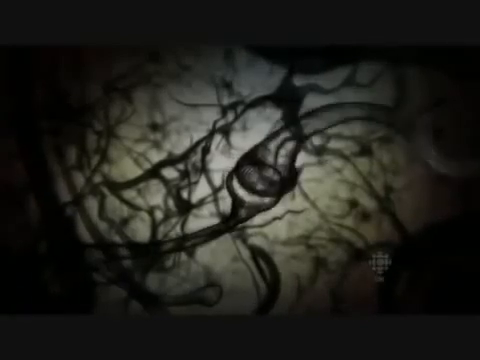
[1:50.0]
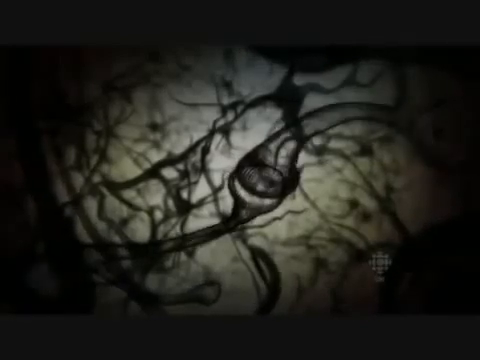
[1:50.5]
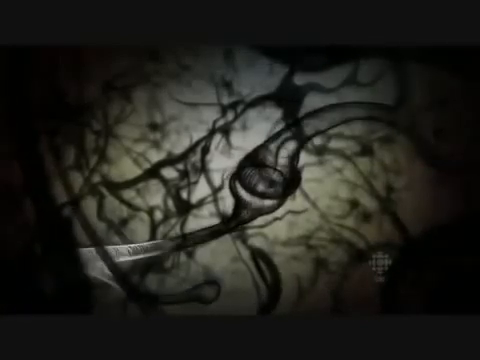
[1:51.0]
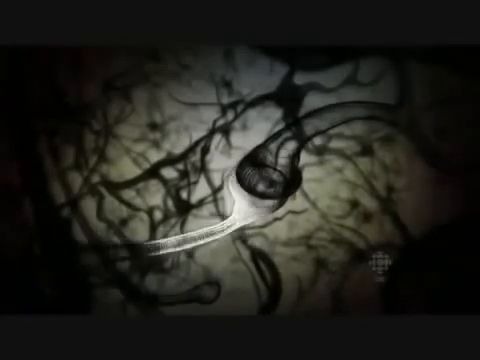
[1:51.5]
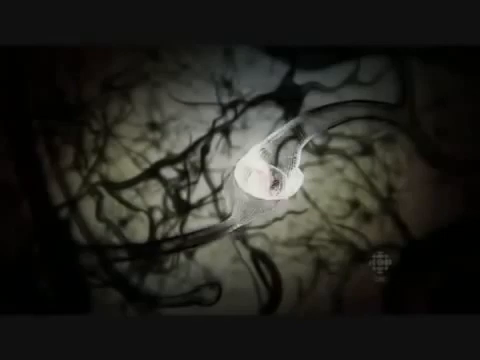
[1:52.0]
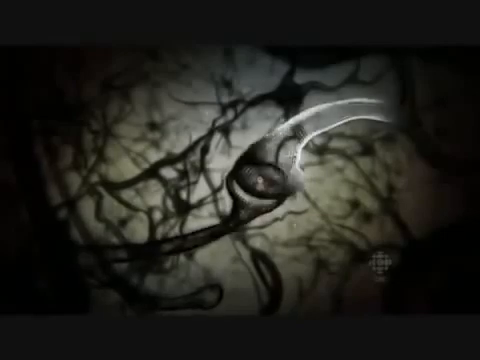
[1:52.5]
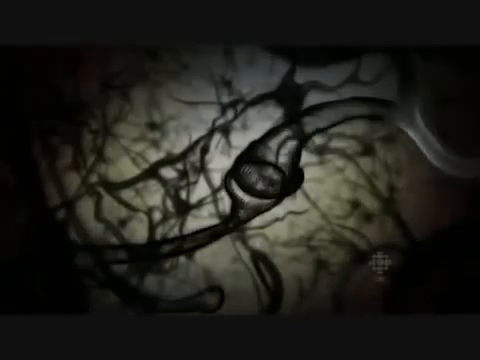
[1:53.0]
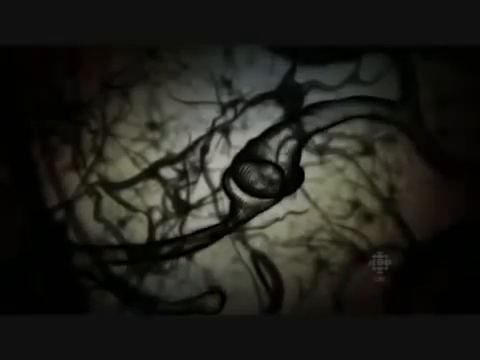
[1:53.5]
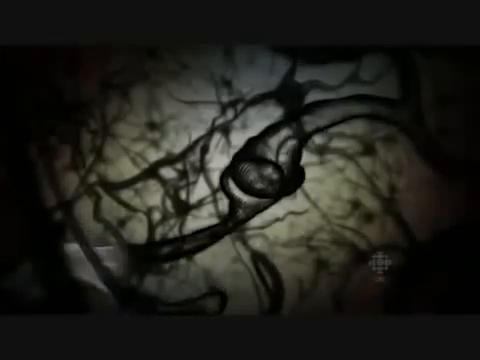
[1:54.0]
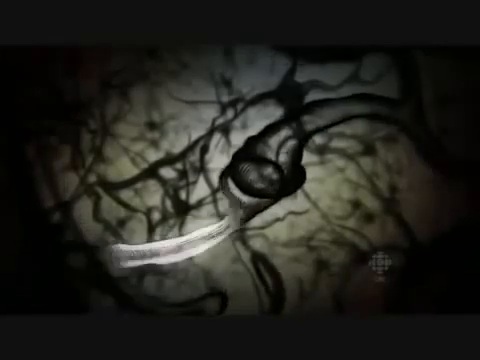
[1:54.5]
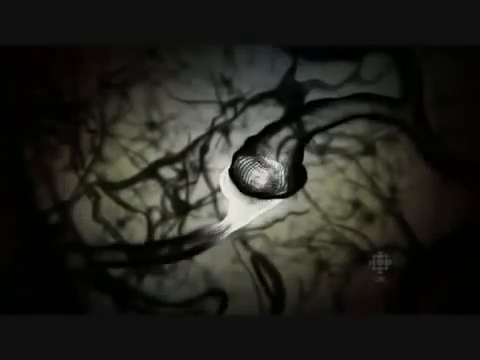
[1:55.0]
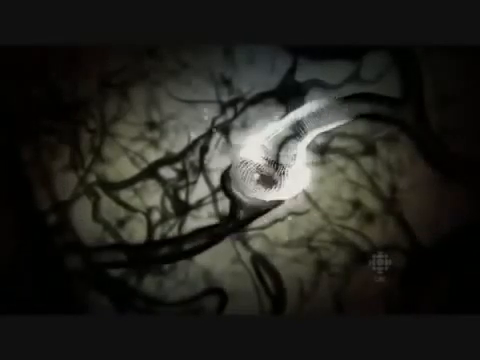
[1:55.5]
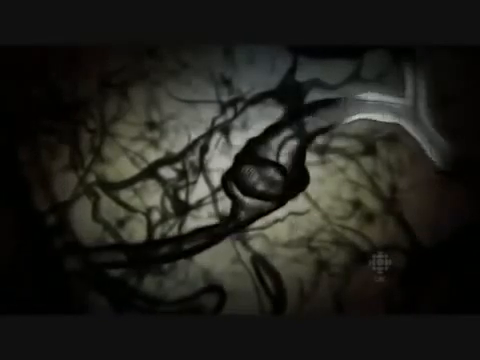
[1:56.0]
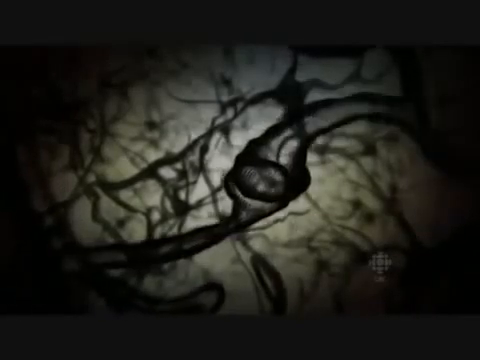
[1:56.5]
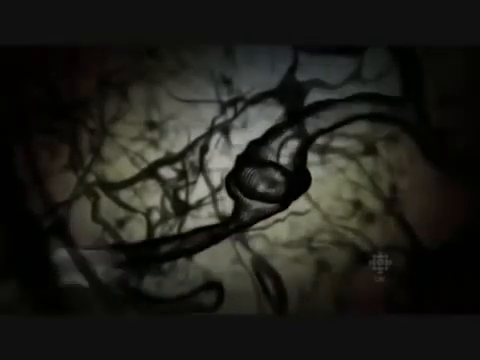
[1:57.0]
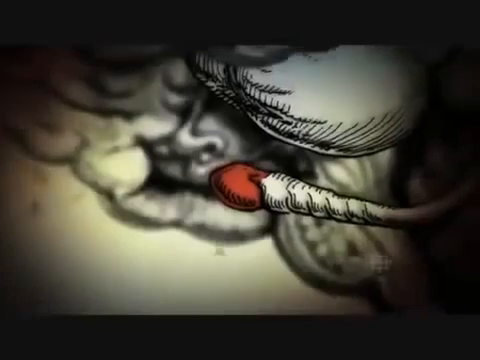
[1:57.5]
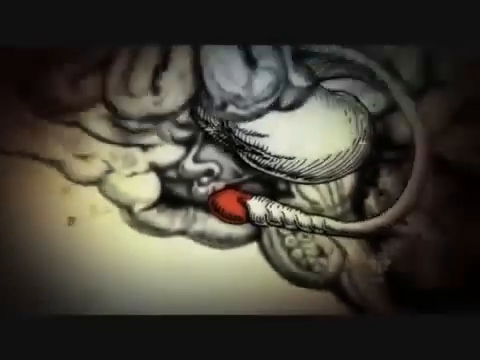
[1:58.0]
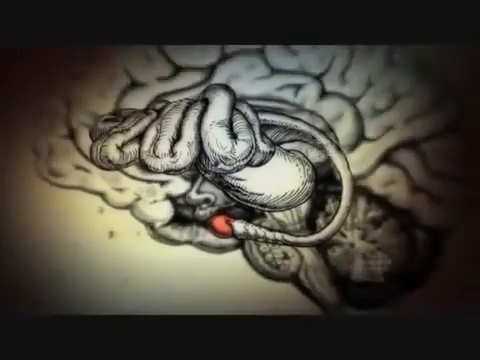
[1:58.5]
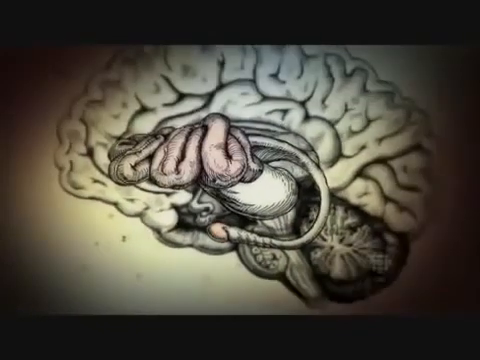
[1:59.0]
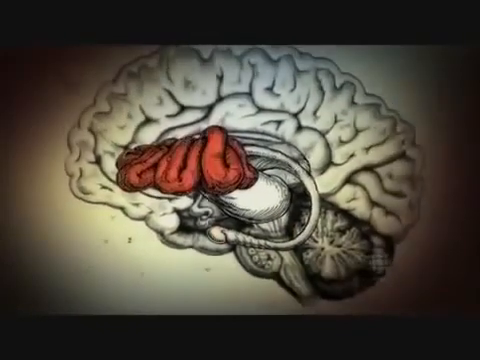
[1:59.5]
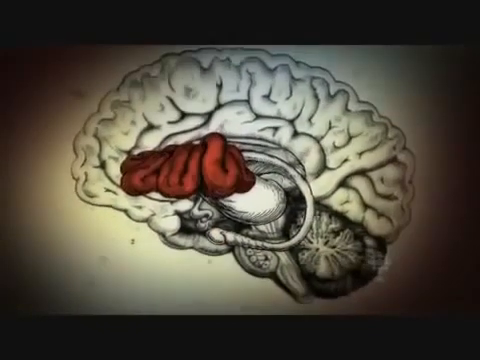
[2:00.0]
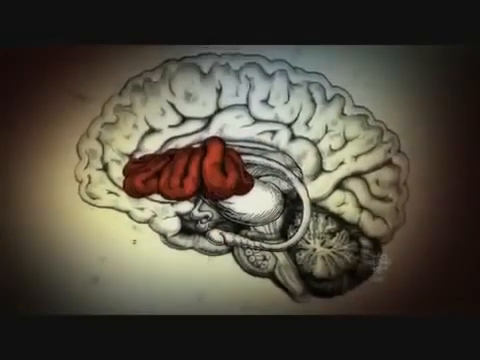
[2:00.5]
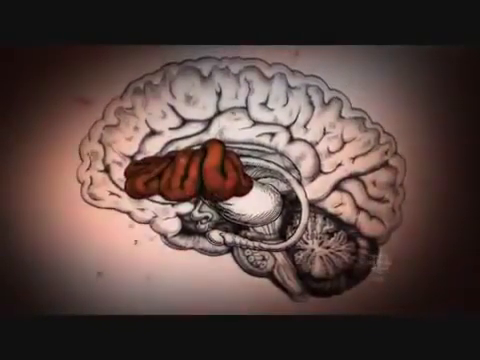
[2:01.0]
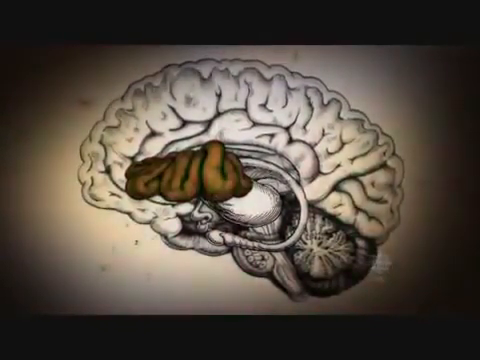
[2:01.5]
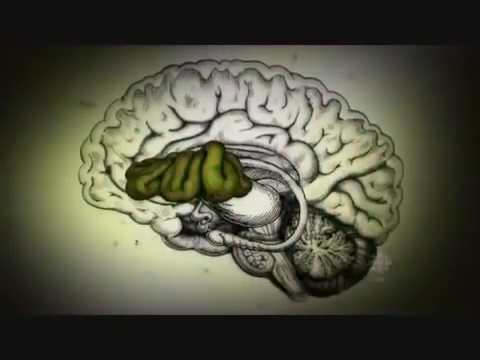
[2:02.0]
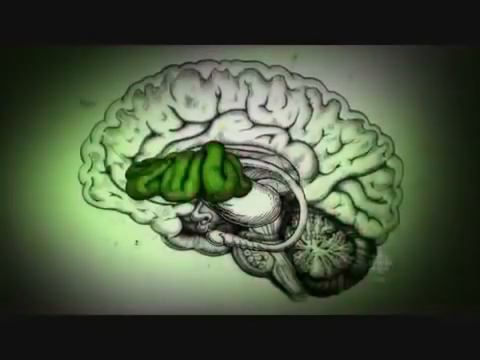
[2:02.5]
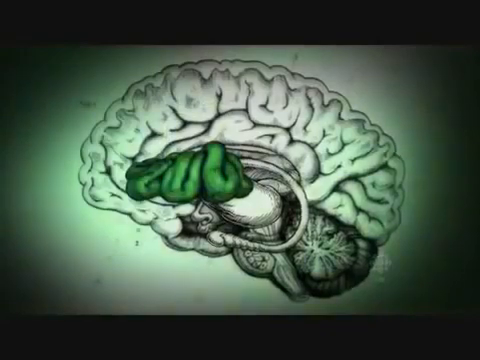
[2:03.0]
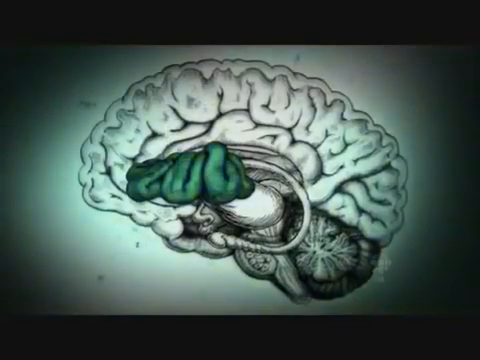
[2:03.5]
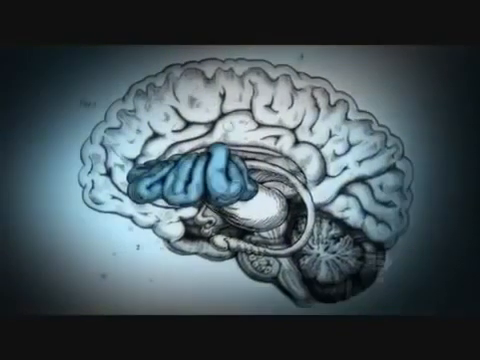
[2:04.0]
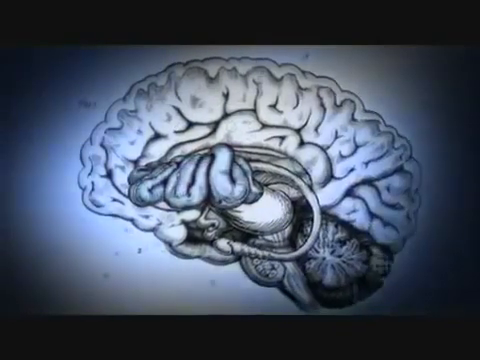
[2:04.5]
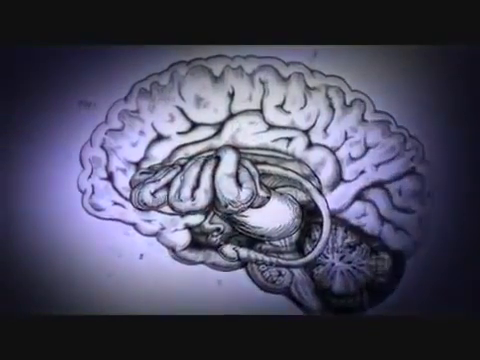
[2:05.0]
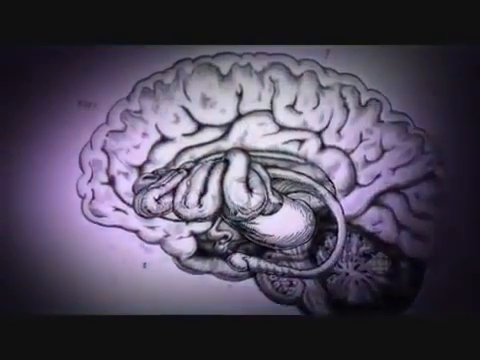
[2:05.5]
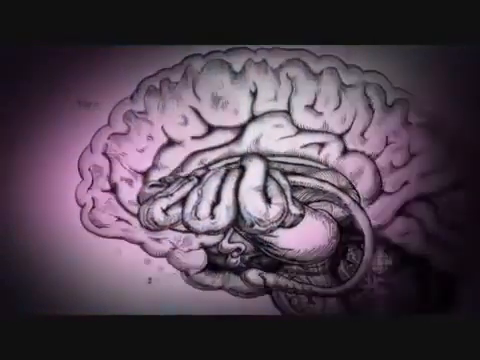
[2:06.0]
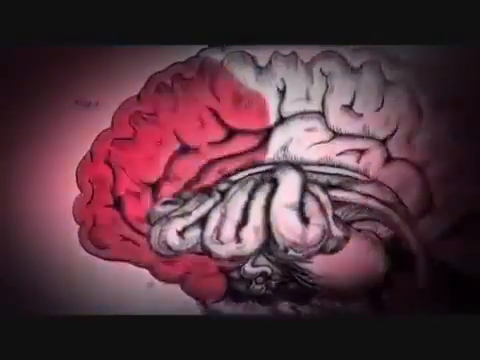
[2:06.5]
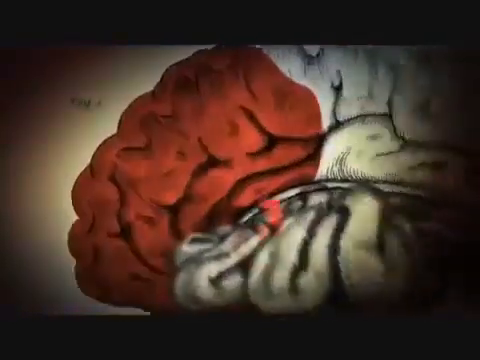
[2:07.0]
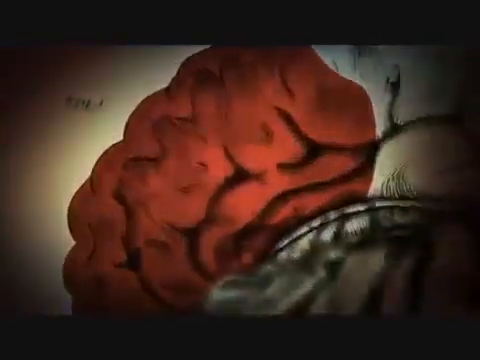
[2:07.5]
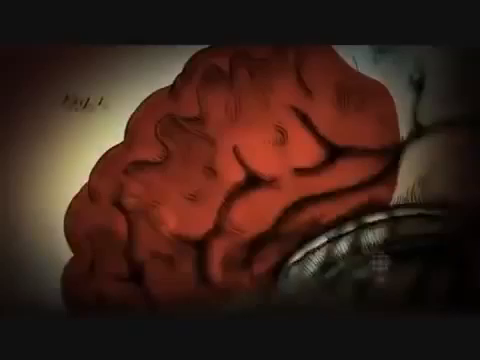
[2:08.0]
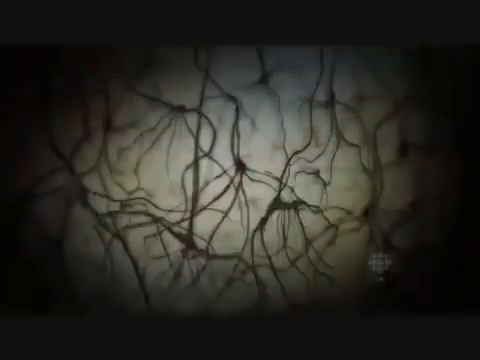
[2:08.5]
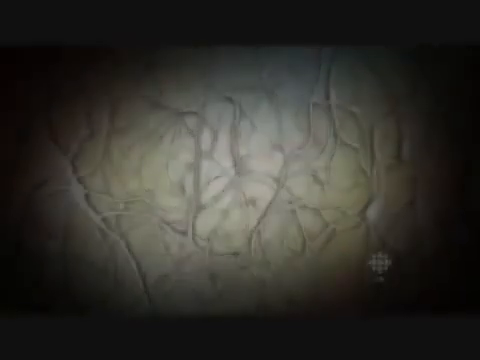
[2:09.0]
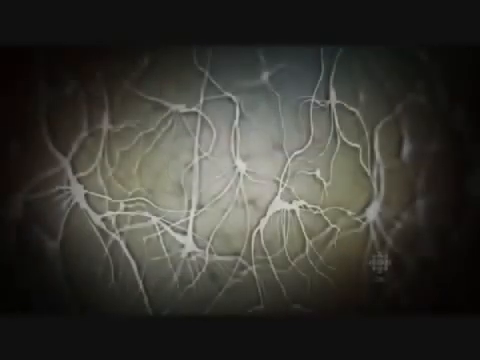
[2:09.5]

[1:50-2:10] Again a neuron on the left side glows white and then a neuron on the right starts to glow white, as the two neurons communicate with each other. A bright light comes from the left side, travels through the left neuron and transfers over to the neuron on the right side, then the light transfers from the center to the right side. The scene changes to a little red piece of the brain. The view zooms outward, showing a large red piece in the back center of the brain. This piece turns green and then blue. The camera zooms into the back part of the brain, which becomes red and then dark red. A different scene shows a lot of neurons that all turn very bright white.